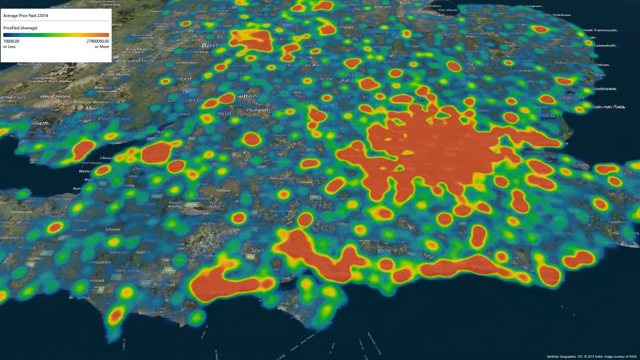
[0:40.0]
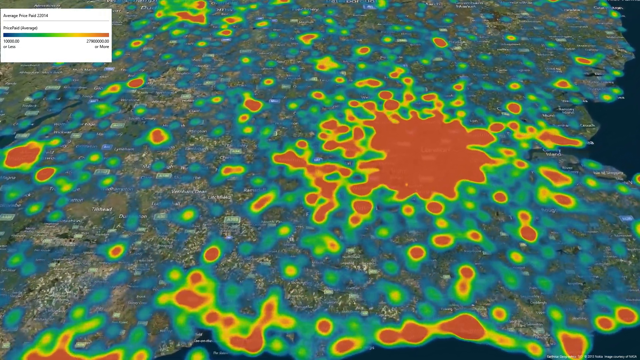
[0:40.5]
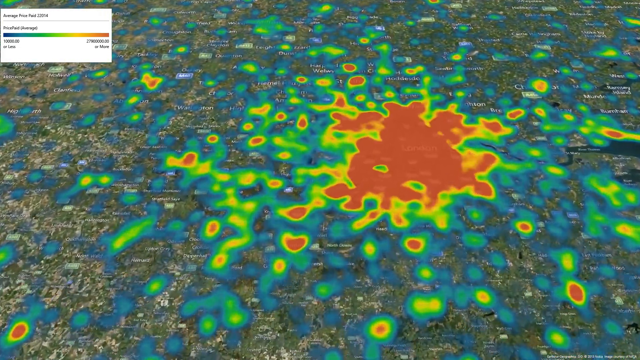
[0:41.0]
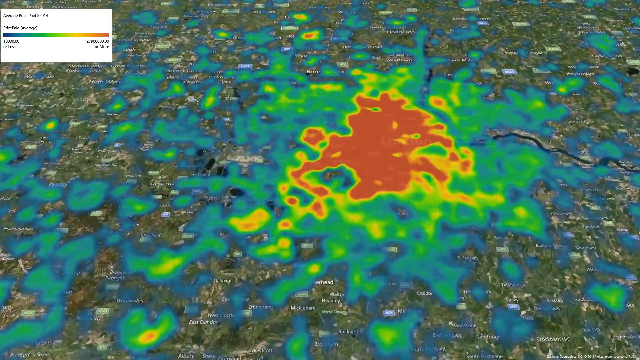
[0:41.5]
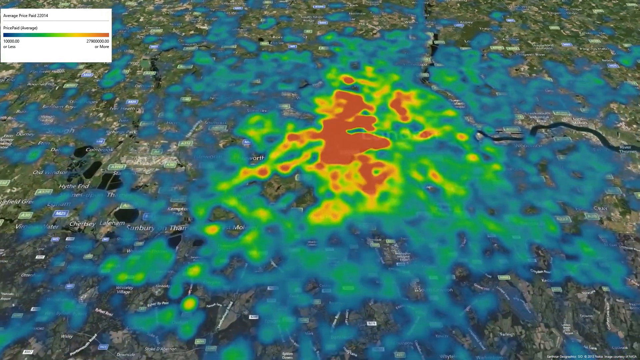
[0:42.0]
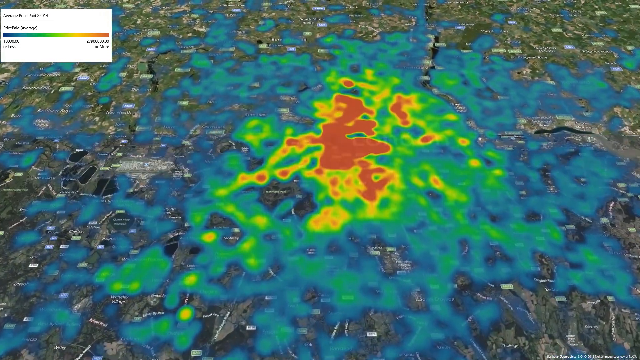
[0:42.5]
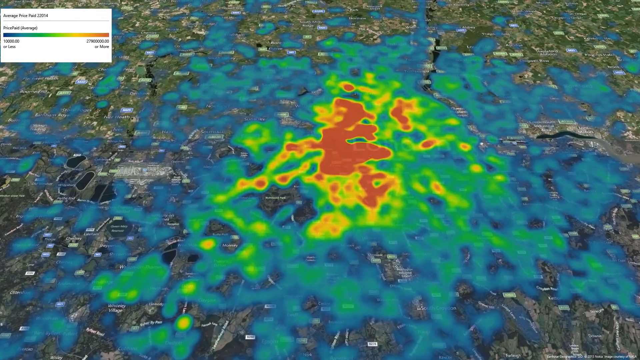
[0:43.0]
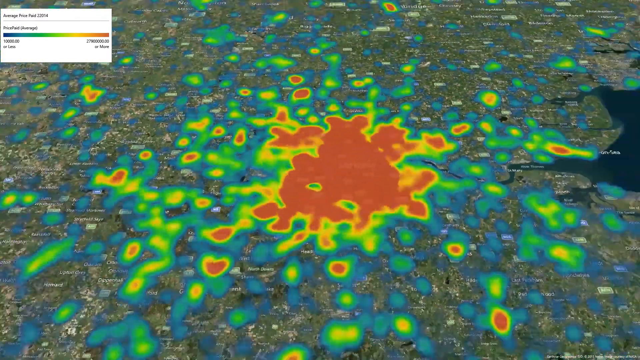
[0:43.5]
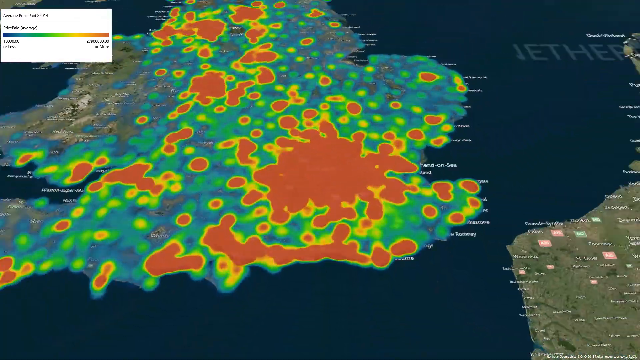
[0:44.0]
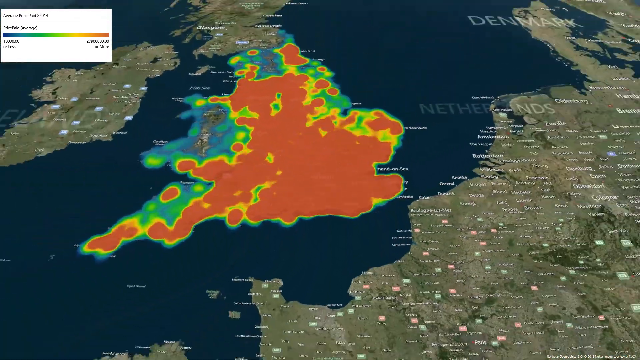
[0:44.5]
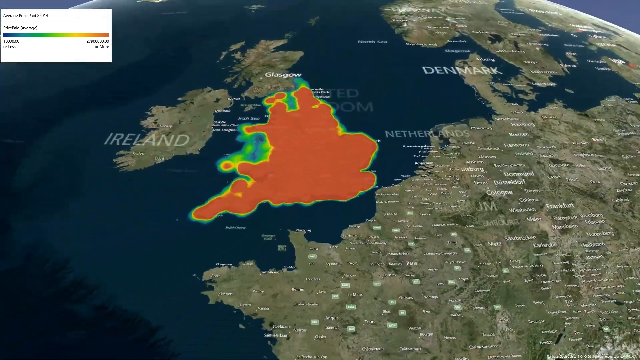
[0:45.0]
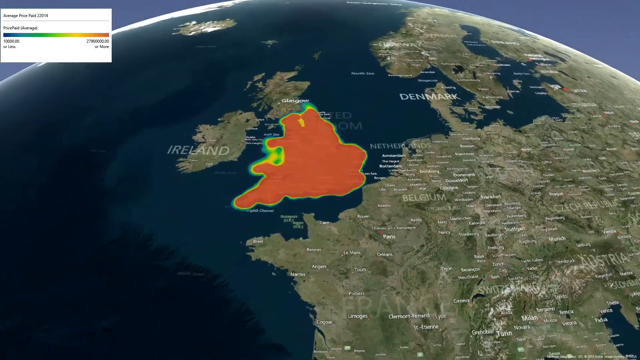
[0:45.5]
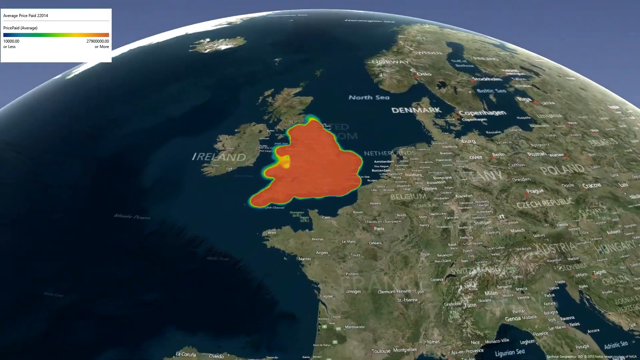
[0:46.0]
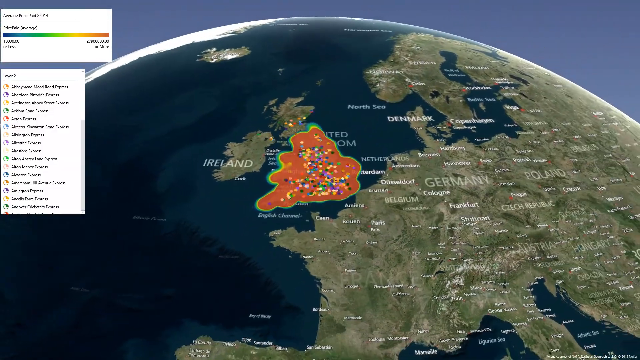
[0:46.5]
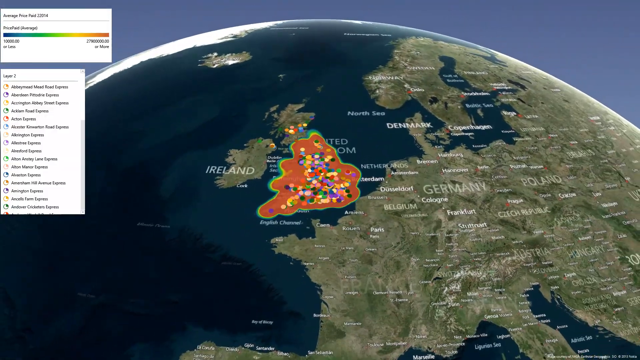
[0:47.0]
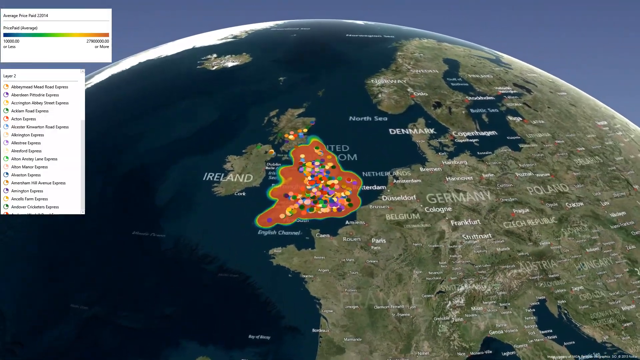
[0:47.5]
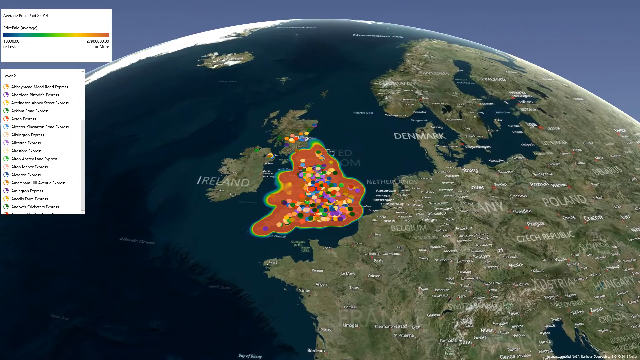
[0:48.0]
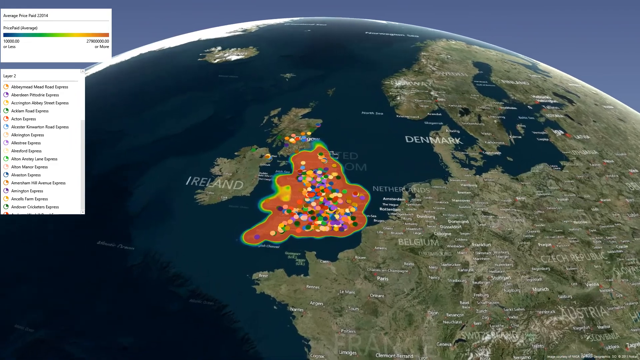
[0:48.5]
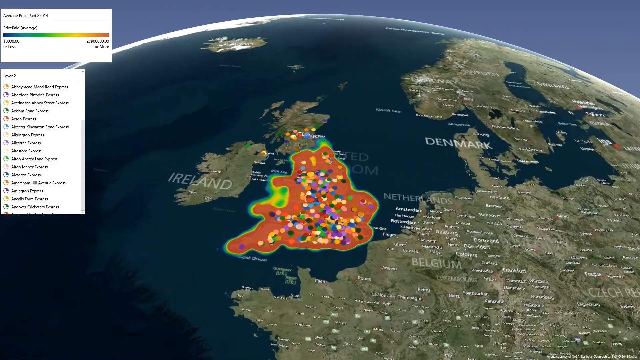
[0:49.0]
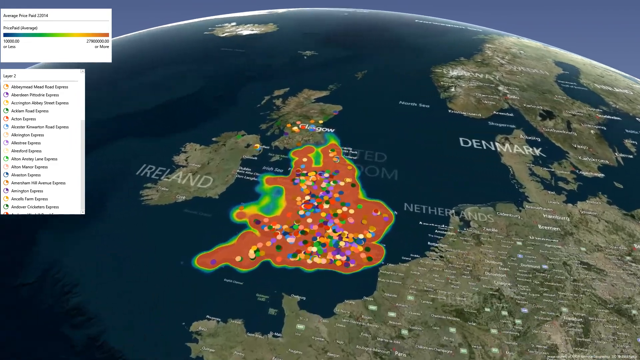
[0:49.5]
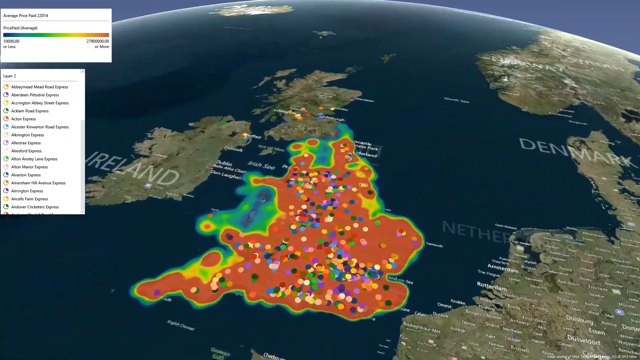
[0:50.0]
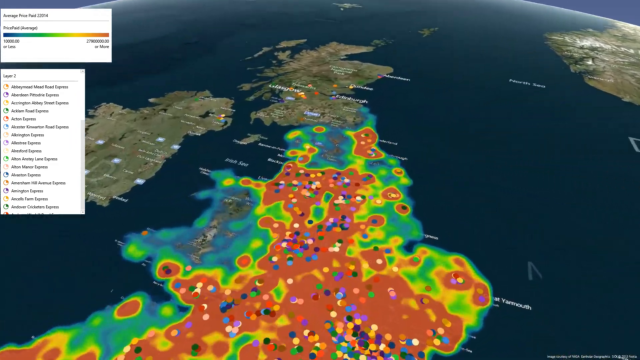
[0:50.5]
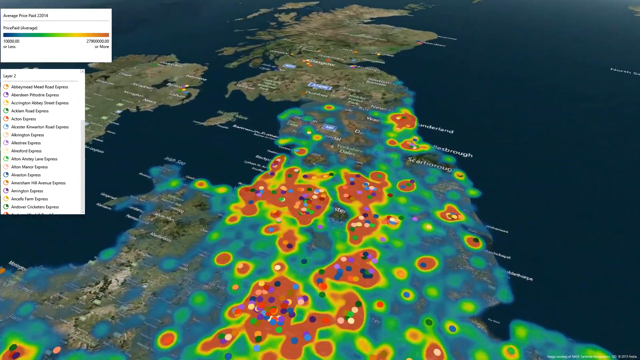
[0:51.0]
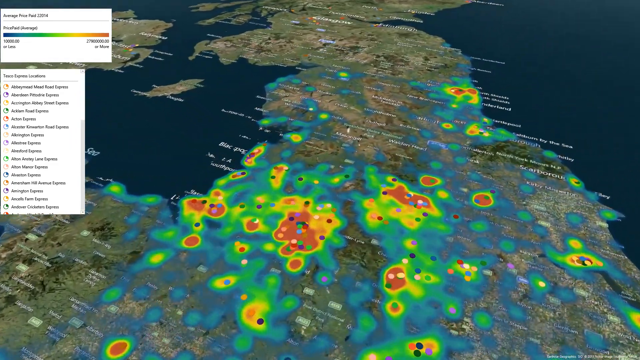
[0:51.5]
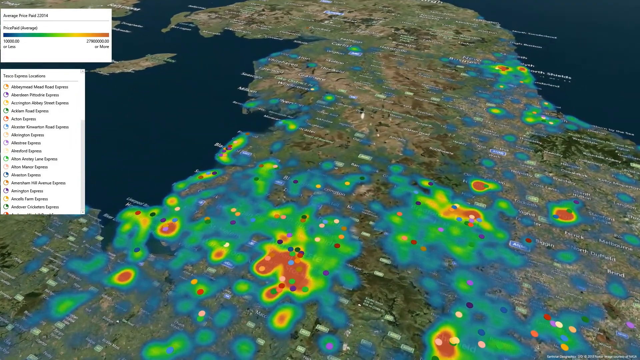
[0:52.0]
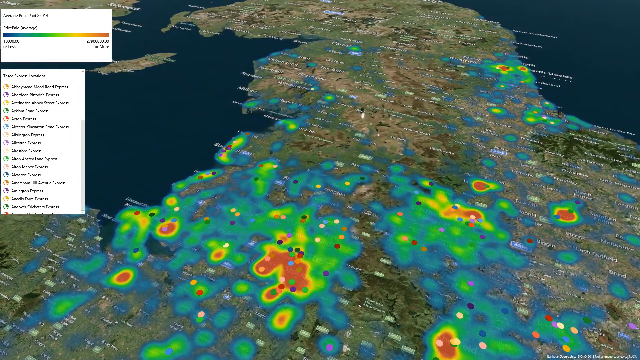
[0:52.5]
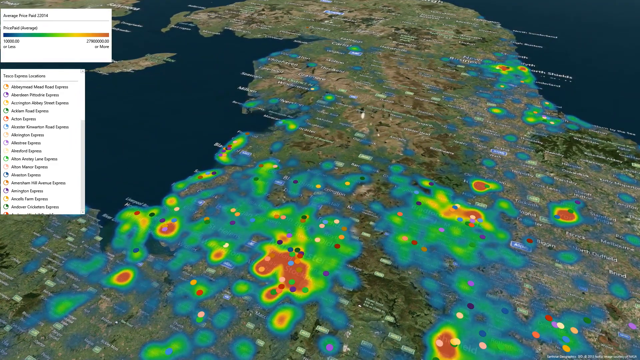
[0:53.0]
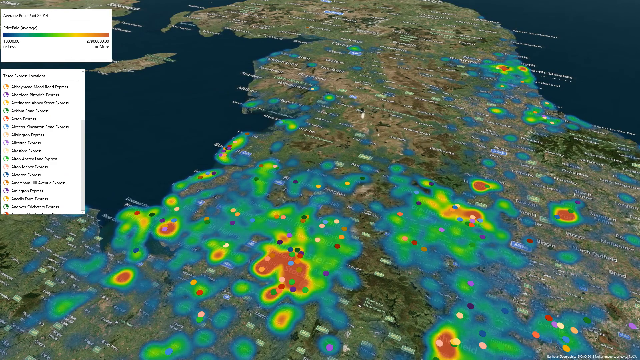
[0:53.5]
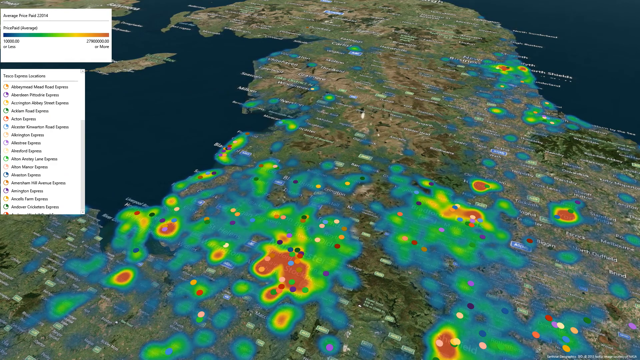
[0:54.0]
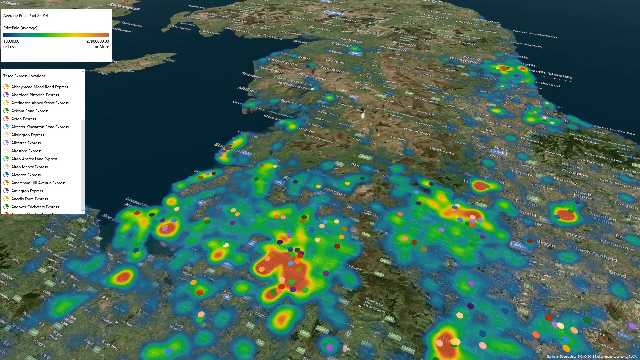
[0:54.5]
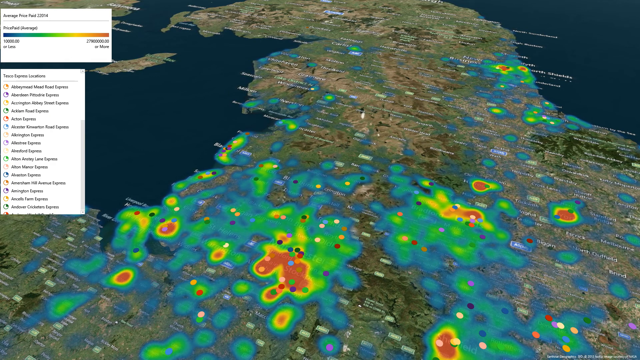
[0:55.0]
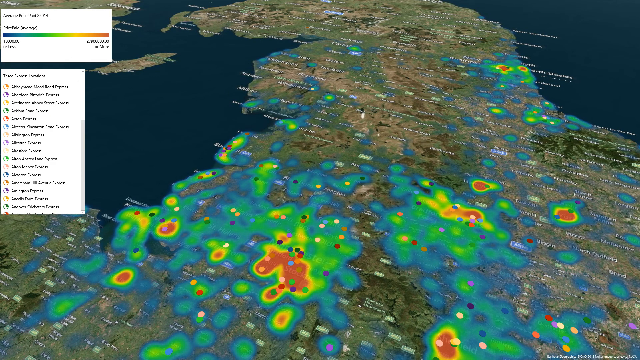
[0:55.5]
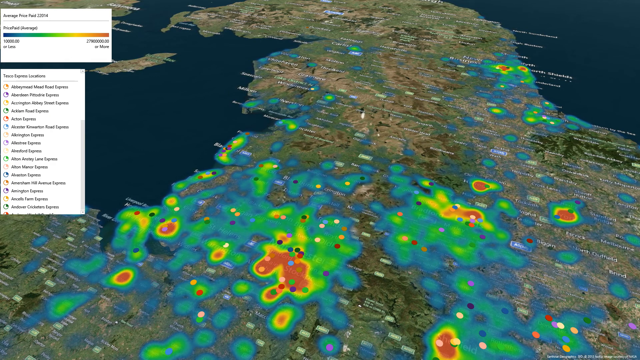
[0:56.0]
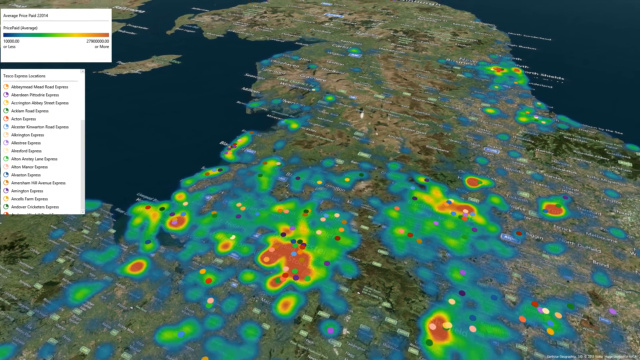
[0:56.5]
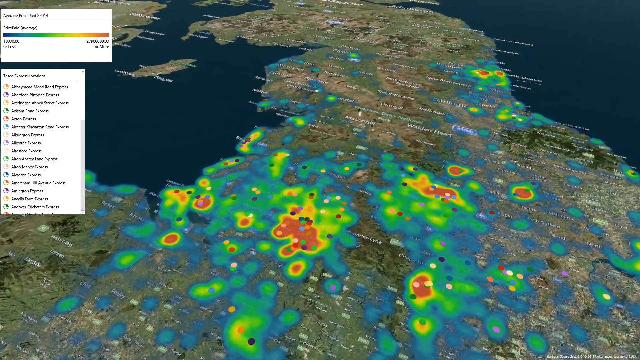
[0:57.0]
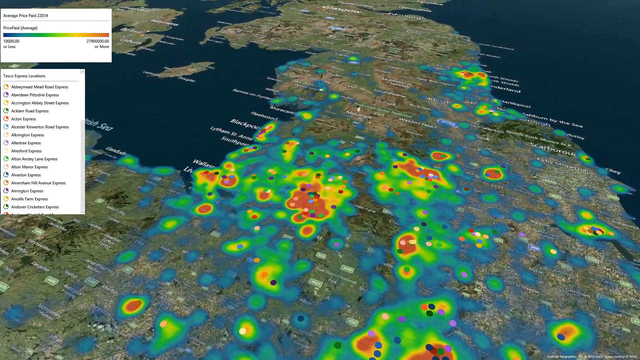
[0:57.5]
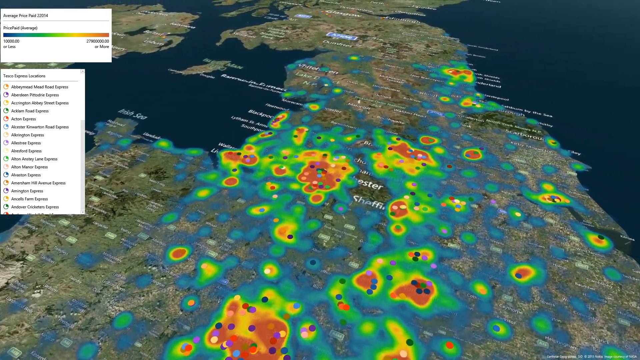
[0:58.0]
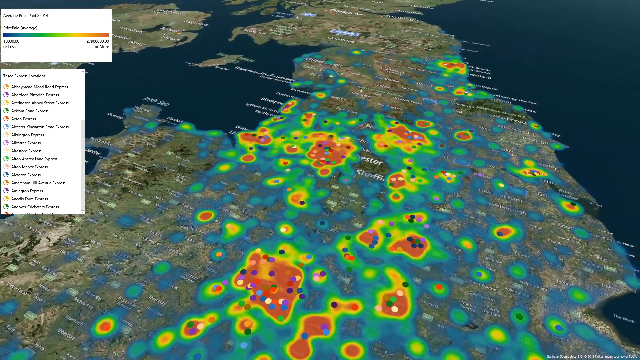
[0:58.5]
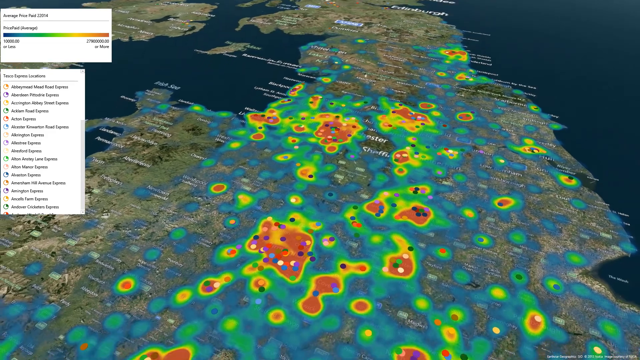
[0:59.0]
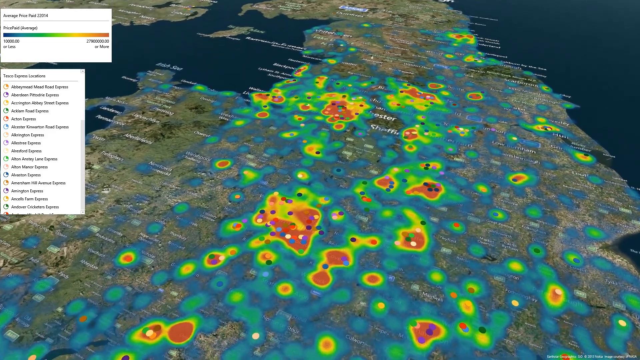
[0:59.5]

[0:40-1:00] As the camera pans back out, the larger spots of red are visible. The view zooms in on one of the largest red spots, showing that only its central portion is actually red. It then zooms out and a new text box appears on screen. Only some of its text can be made out: it reads "trace express locations" followed by an alphabetical list of what looks like city names, which is a bit blurry and not clearly legible. The view continues to move in and out over different portions of the landmass, showing how the colors of the graph's results change with zooming in and out. The box in the top left corner reads "average price paid to" and possibly a year. Its measurement bar flows from dark blue at one end into medium blue and light blue, then green and a lighter green that flows into yellow, then a sort of orange shade, with the final shade being a darker red.